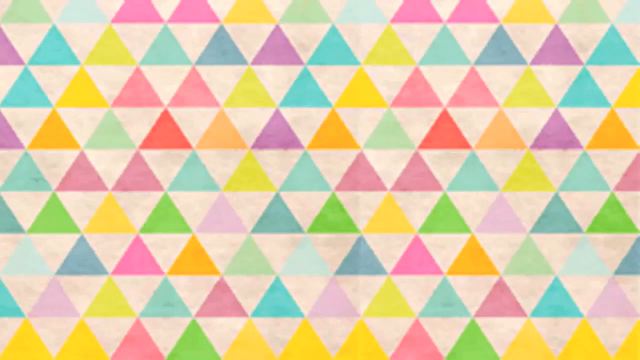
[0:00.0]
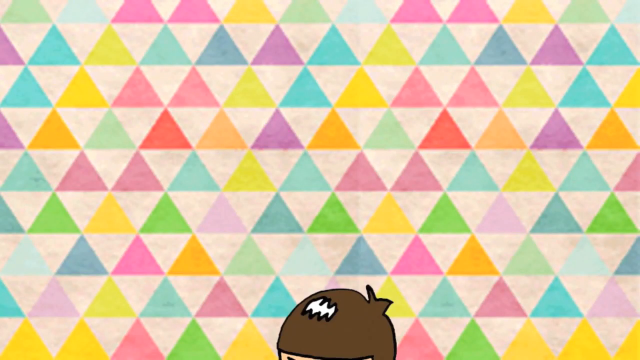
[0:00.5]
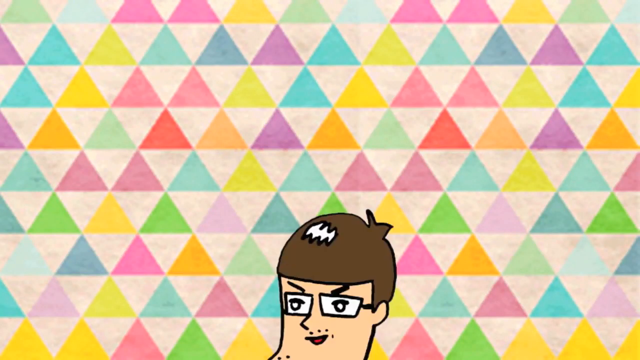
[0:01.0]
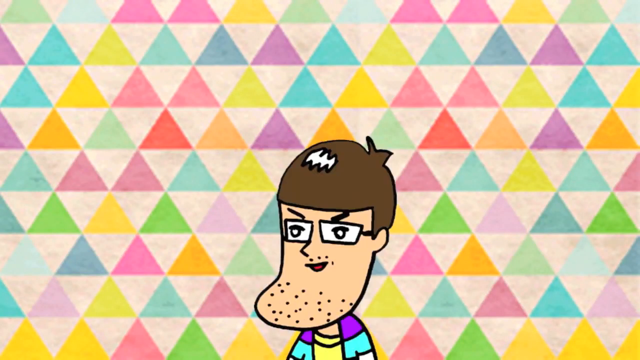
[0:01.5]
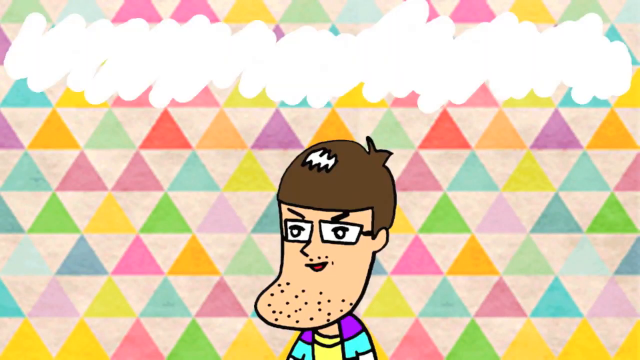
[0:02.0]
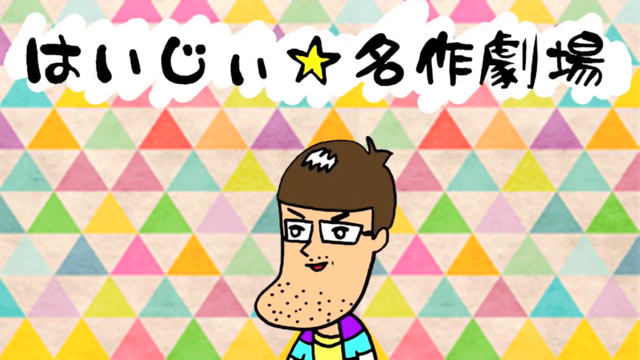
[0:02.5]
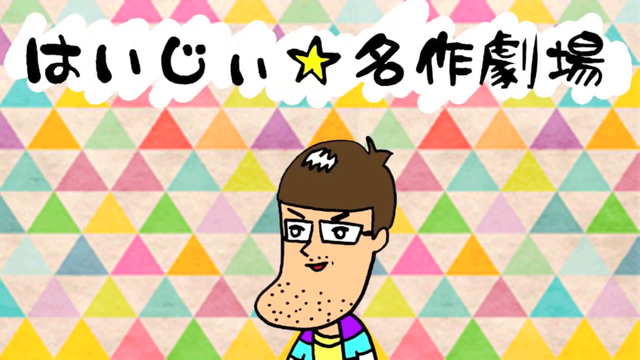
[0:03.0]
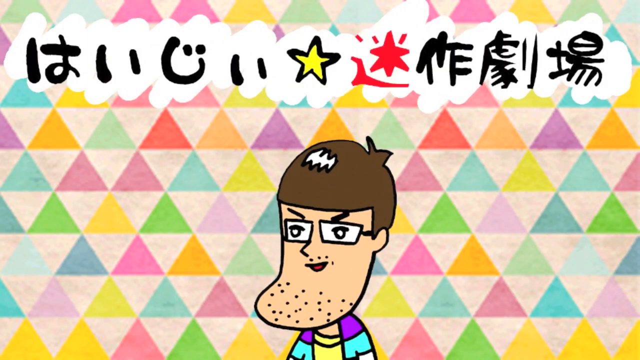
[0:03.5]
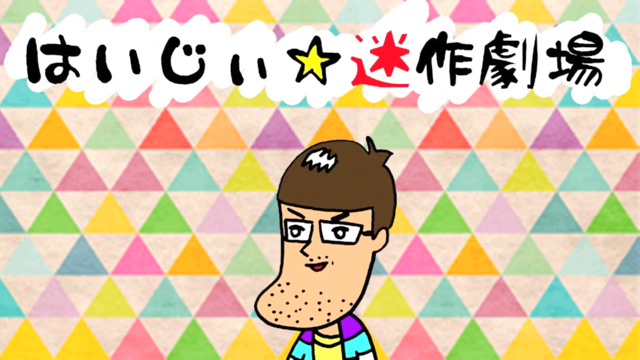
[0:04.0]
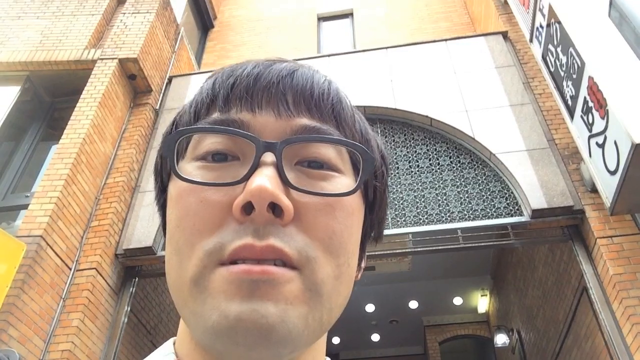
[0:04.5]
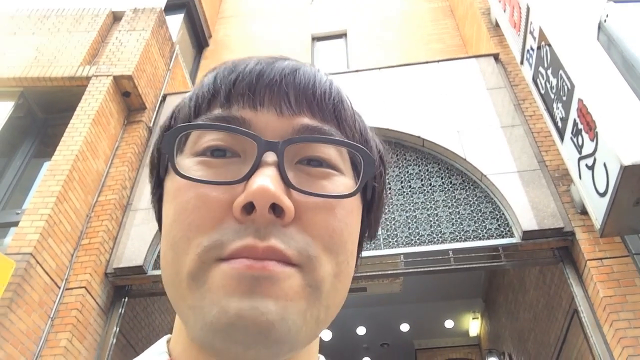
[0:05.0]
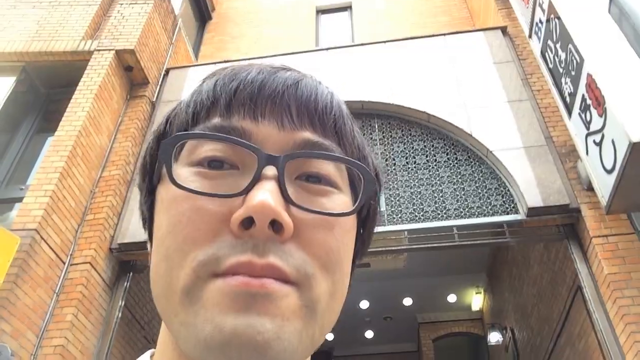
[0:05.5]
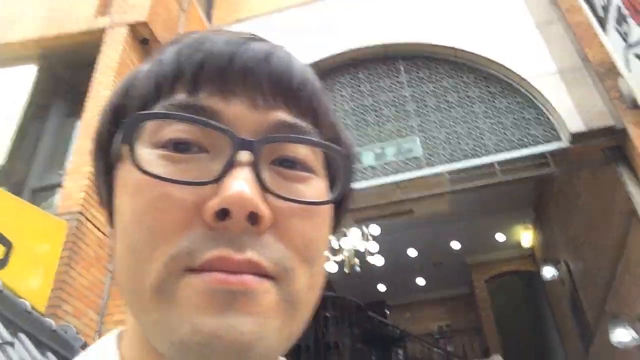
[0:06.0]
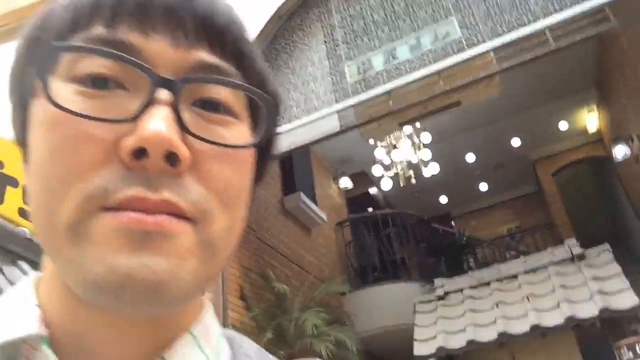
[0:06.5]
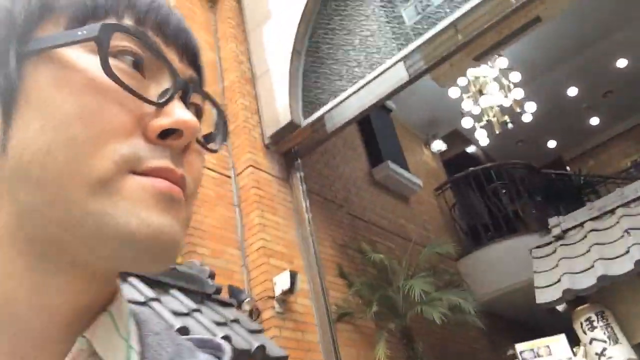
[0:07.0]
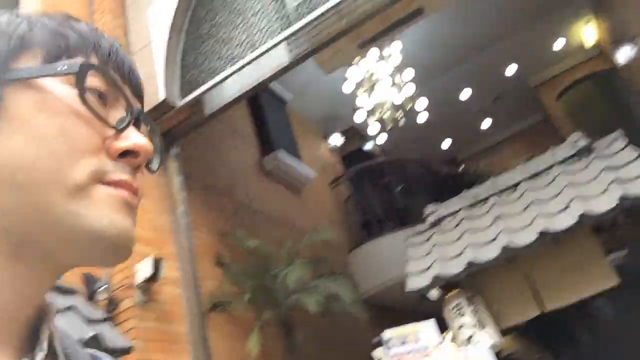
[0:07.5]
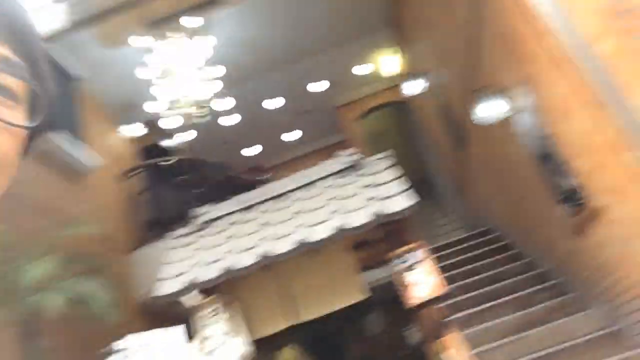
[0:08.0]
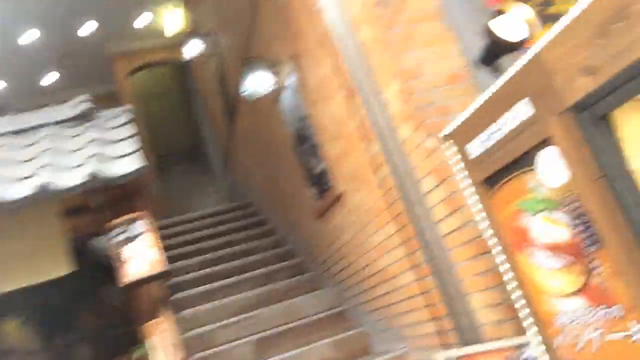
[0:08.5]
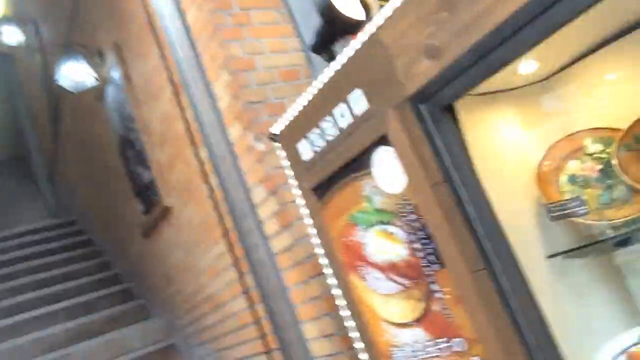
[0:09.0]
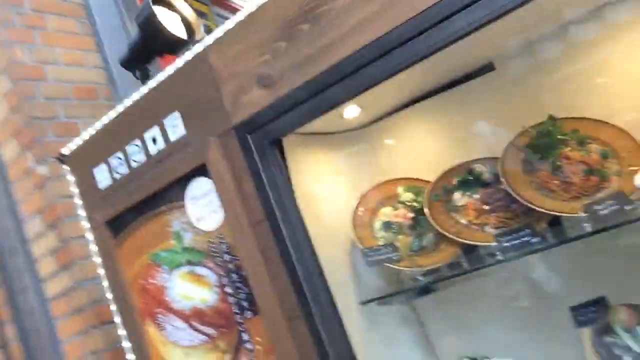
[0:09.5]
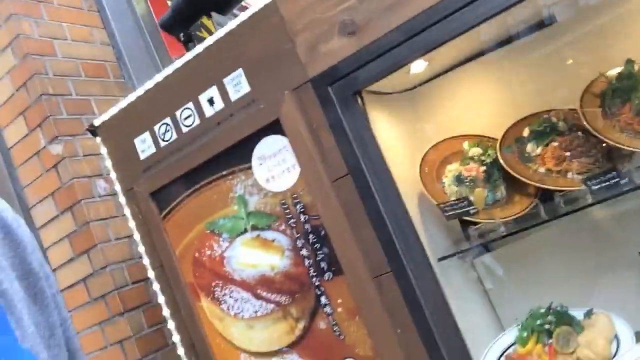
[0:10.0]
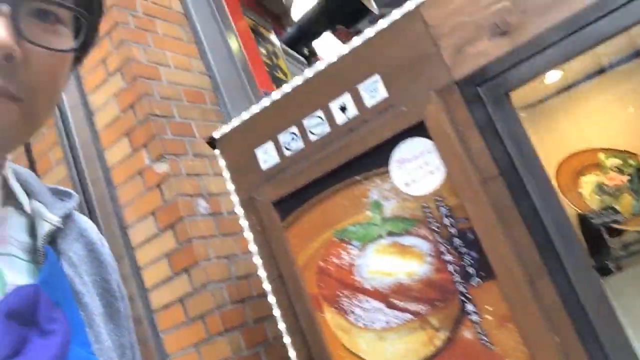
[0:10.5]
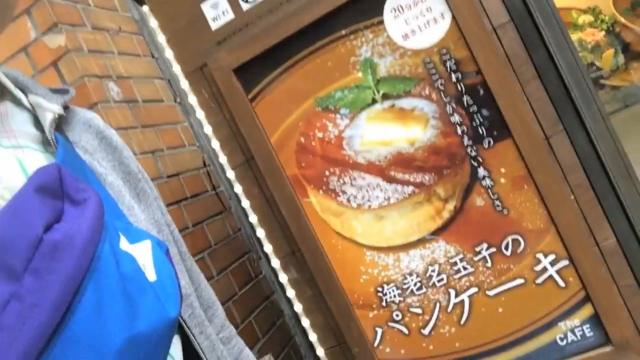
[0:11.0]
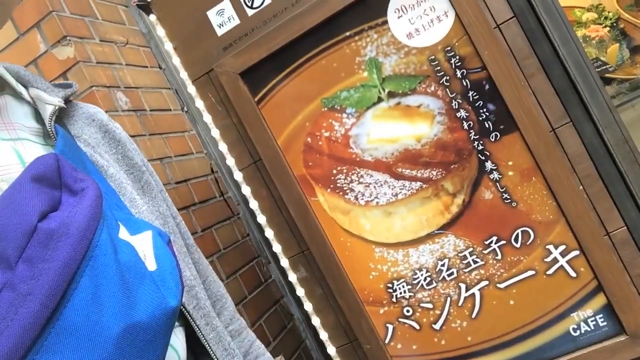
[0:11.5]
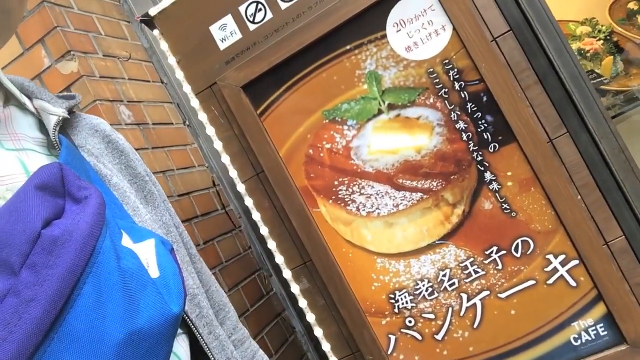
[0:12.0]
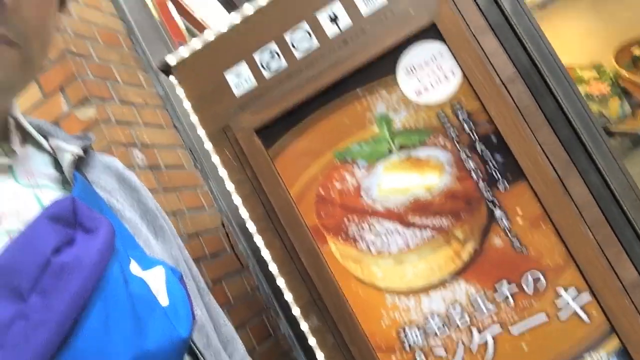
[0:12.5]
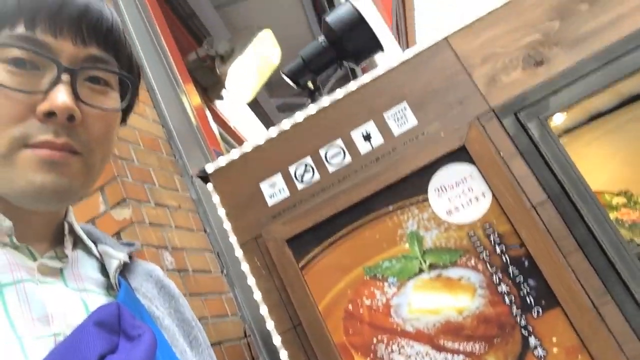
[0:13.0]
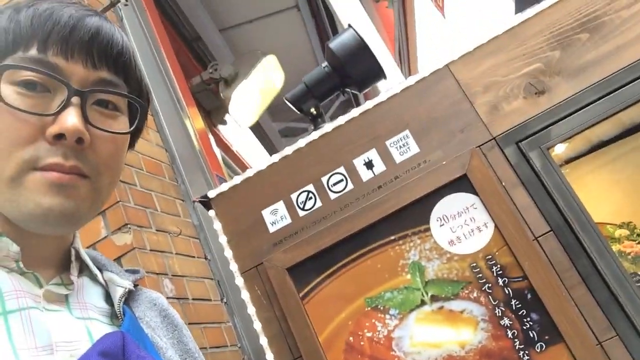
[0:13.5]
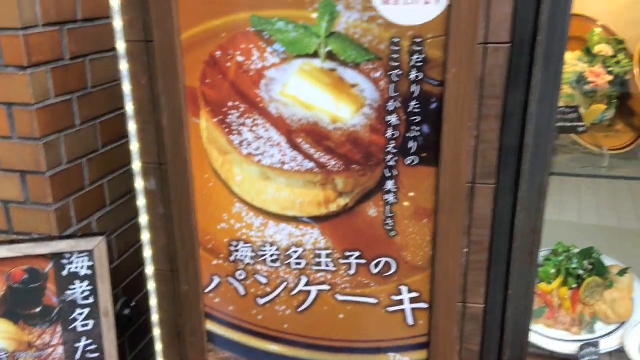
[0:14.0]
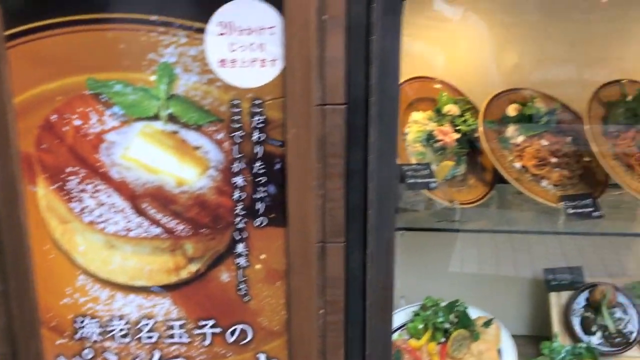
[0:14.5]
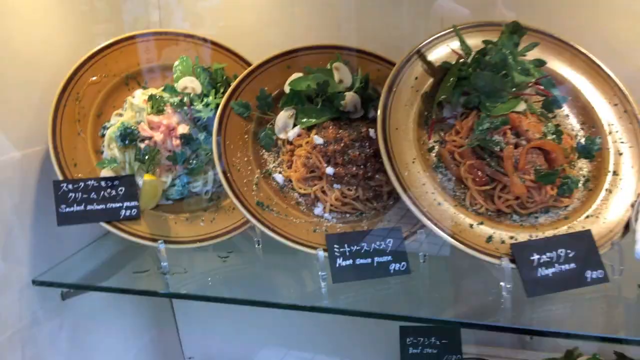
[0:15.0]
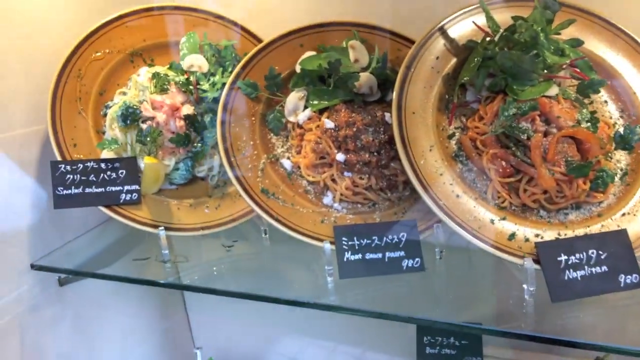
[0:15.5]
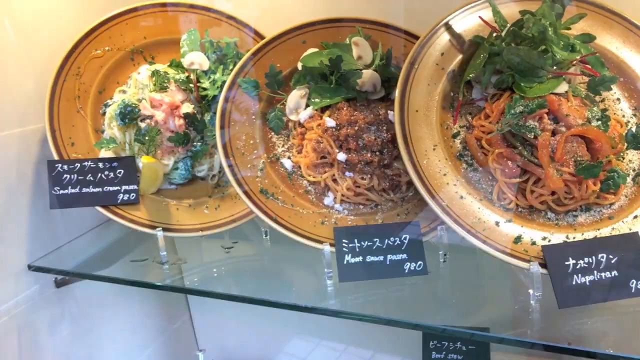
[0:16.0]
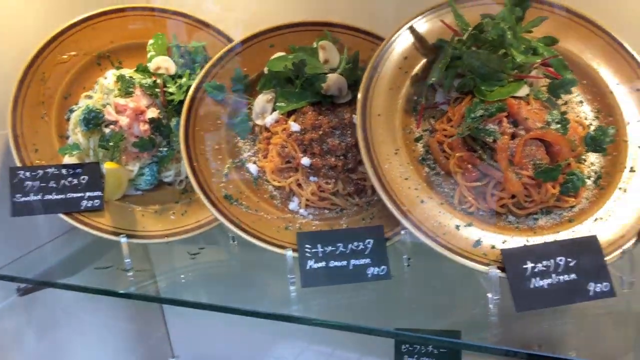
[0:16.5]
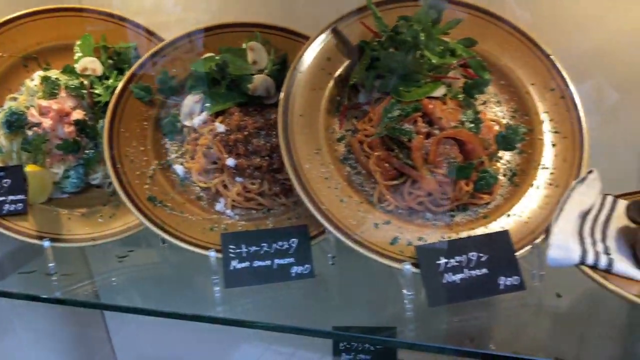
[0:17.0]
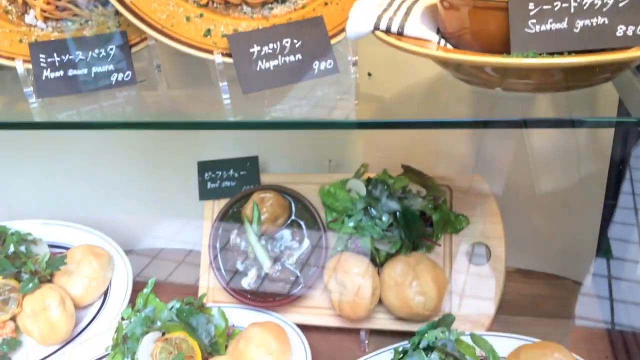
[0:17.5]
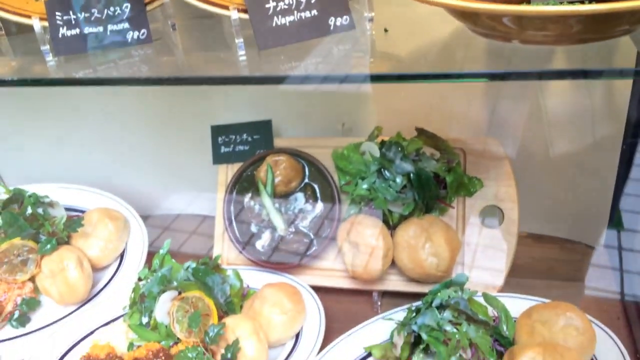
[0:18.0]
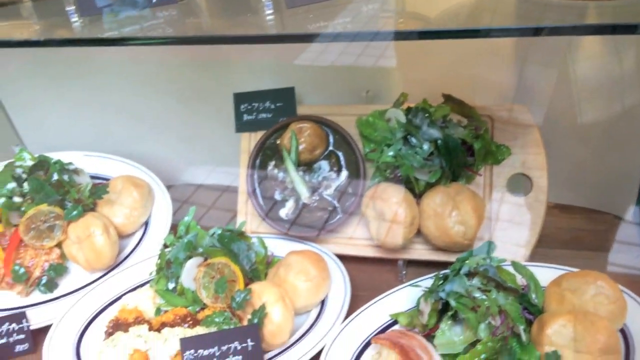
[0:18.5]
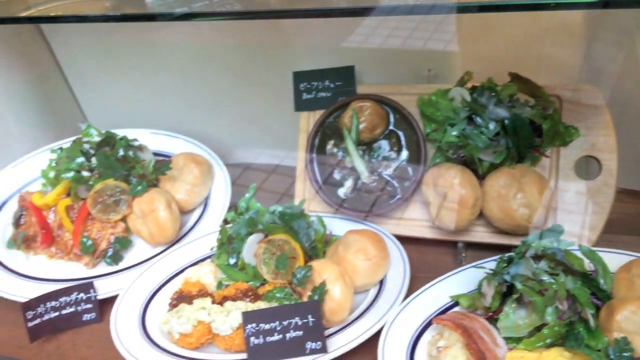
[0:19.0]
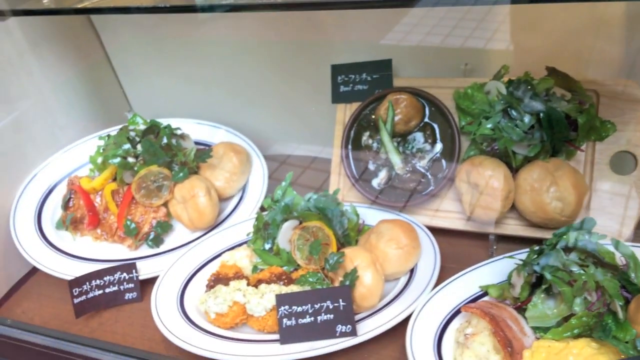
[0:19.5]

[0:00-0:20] An Asian man walks along a busy city street. The video cuts between the man filmed selfie-style and what he sees in front of him. He walks up to a restaurant display window showing replica versions of the actual meals. The video cuts between the display and his face, and he seems to be making a funny or sarcastic smirk. The street signs are all in an Asian language. He then goes inside the restaurant and orders various items from the menu he saw in the window display. It cuts to him taking bites of the food and showing his expression as he tries it. The tone is documentary style, and he is definitely not taking himself too seriously. The man wears glasses and has a short trimmed haircut; he is the only person seen in the video.